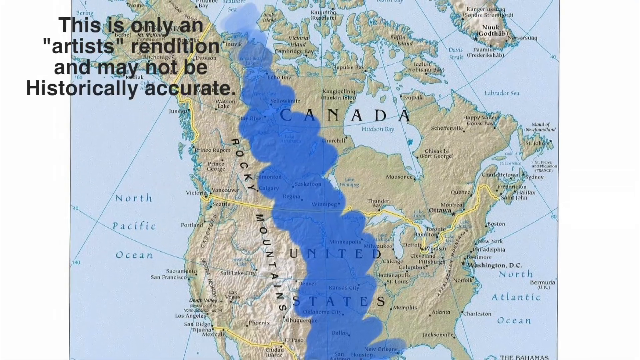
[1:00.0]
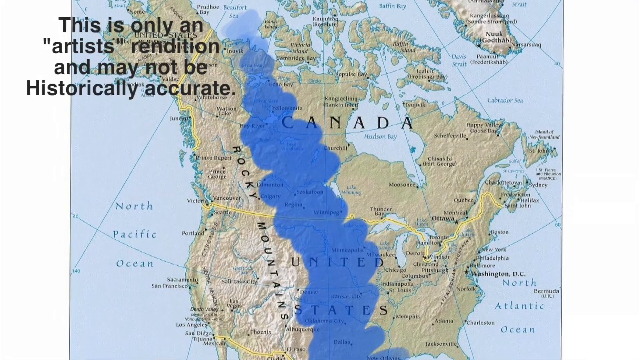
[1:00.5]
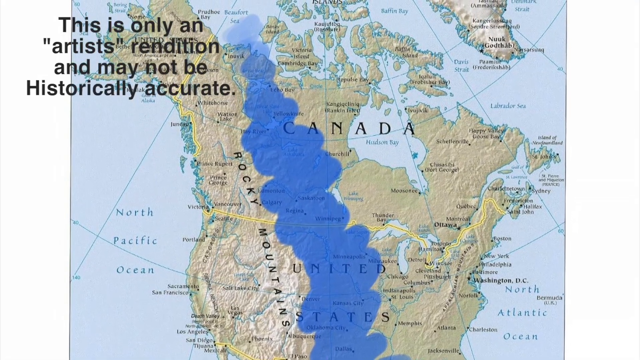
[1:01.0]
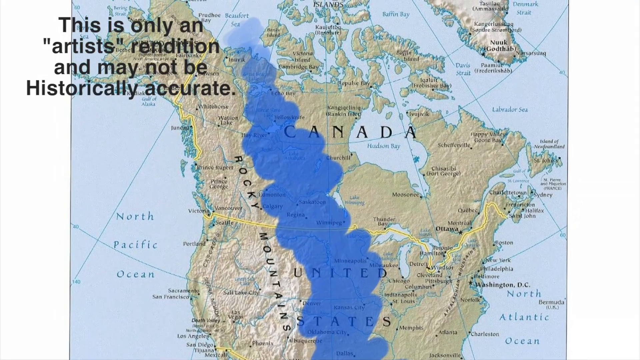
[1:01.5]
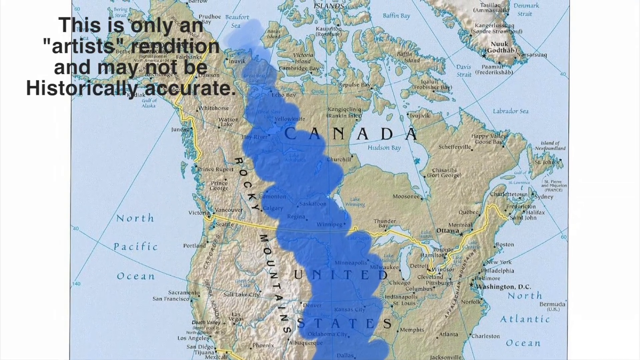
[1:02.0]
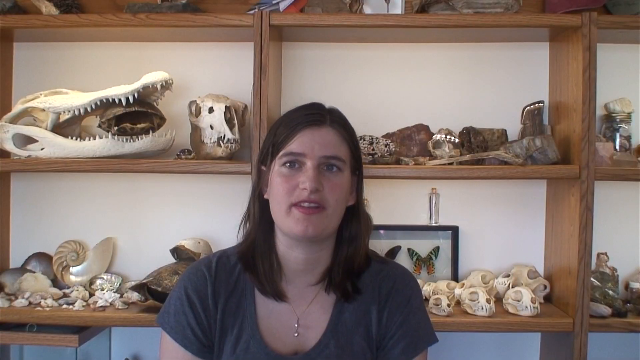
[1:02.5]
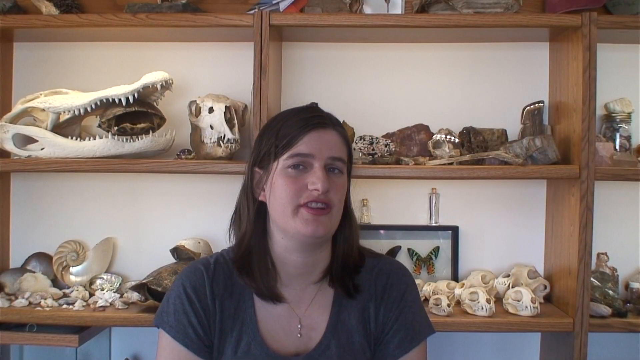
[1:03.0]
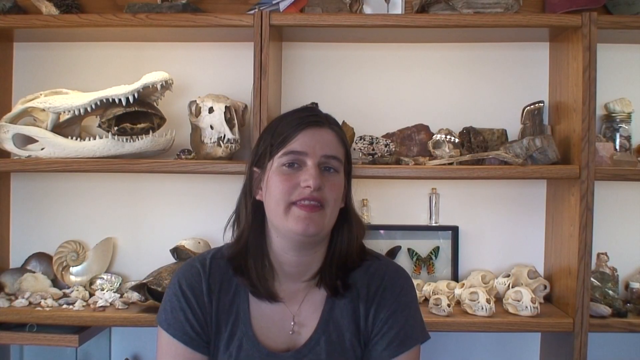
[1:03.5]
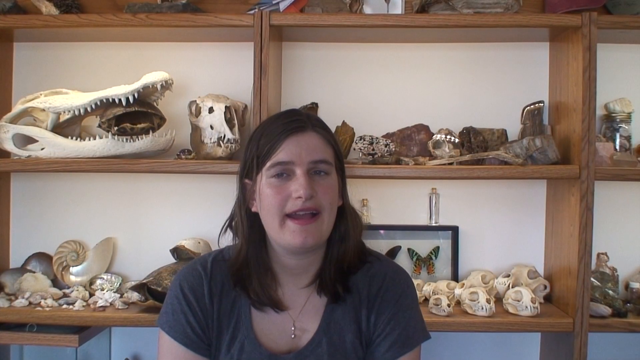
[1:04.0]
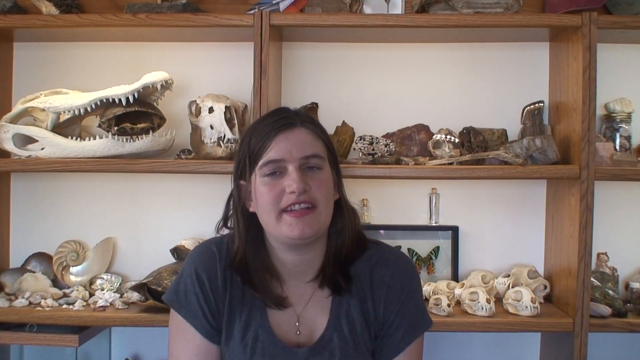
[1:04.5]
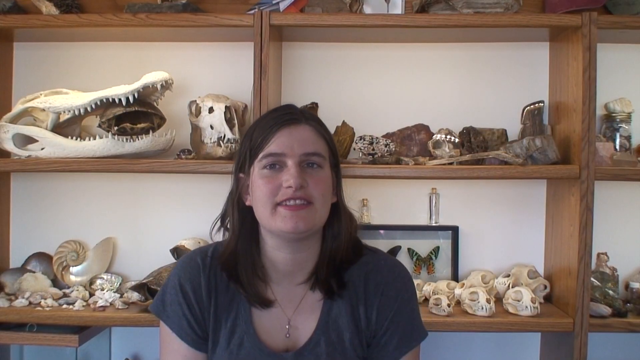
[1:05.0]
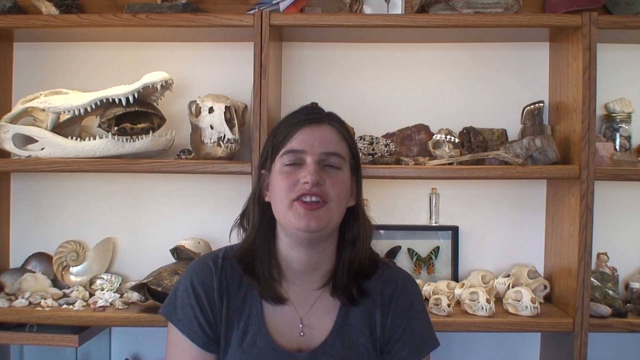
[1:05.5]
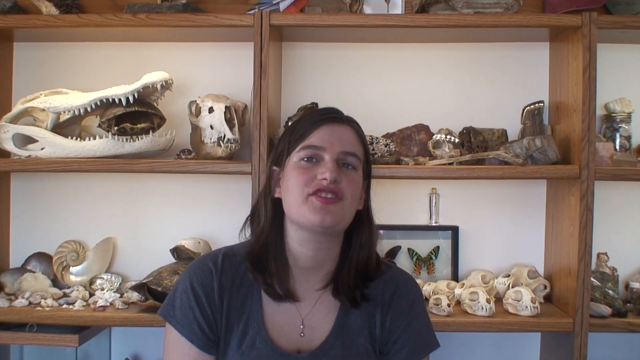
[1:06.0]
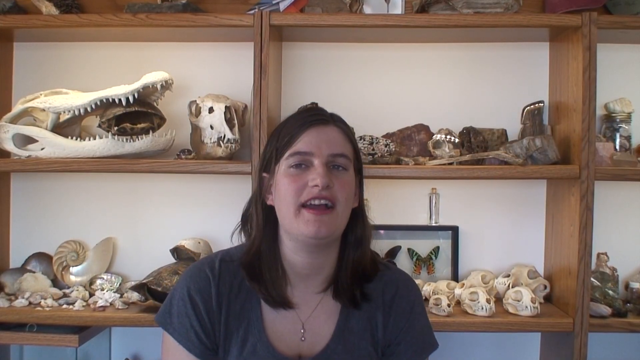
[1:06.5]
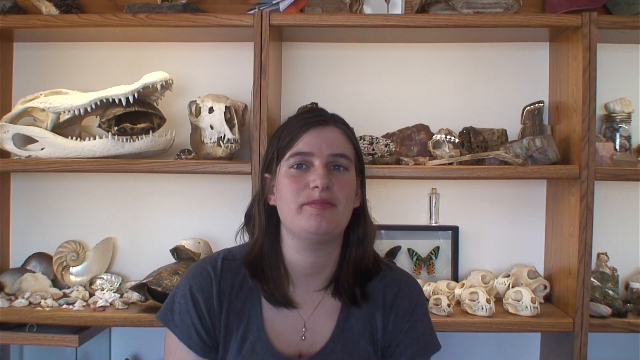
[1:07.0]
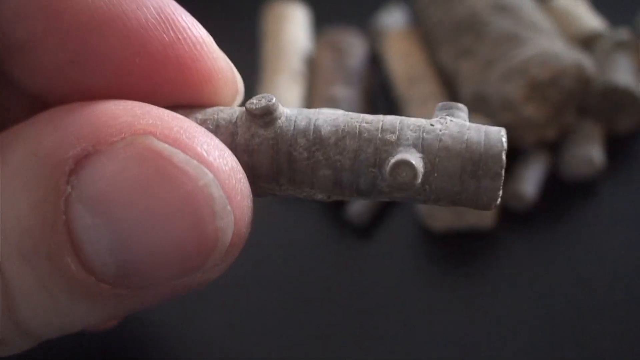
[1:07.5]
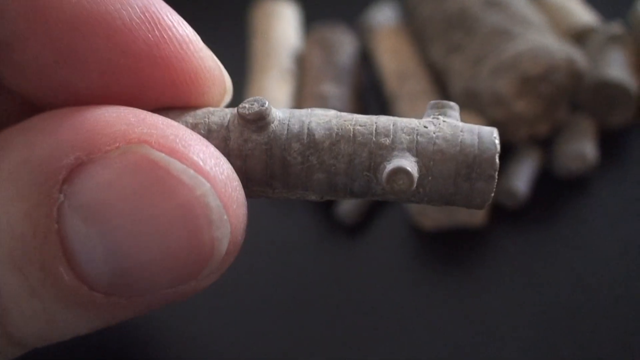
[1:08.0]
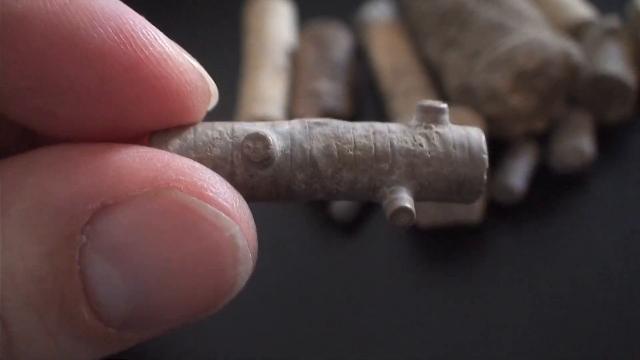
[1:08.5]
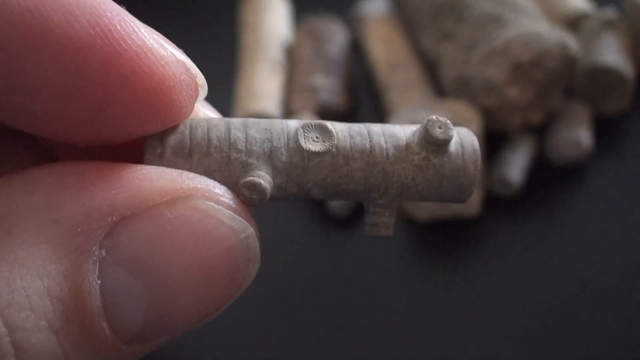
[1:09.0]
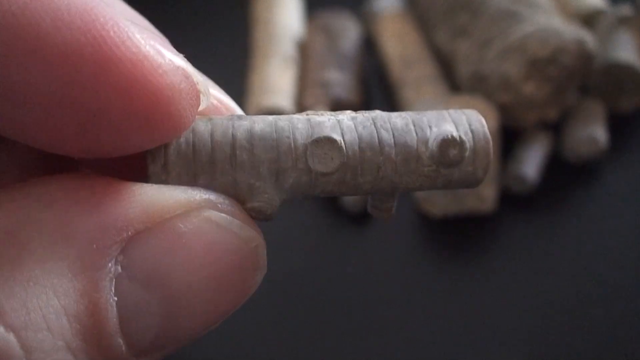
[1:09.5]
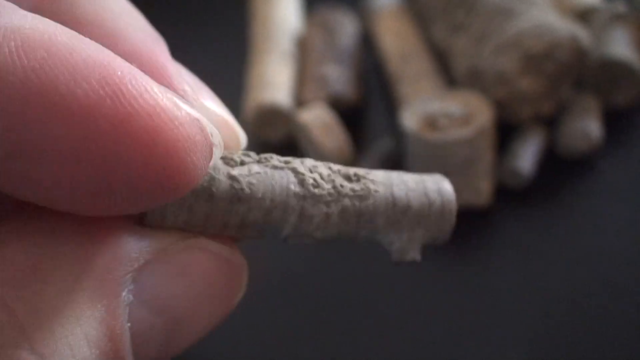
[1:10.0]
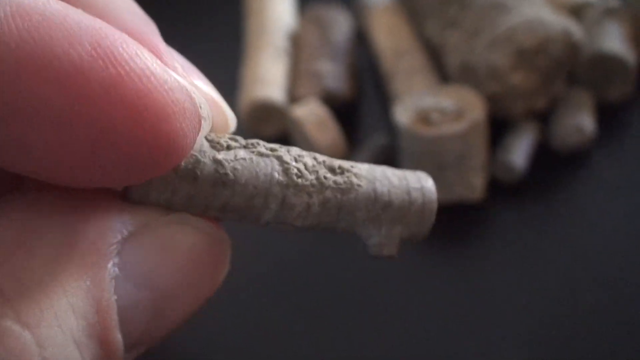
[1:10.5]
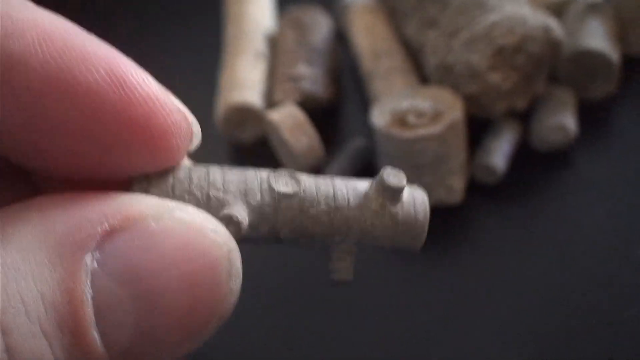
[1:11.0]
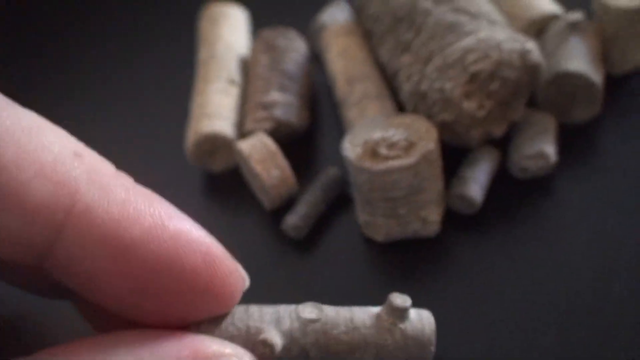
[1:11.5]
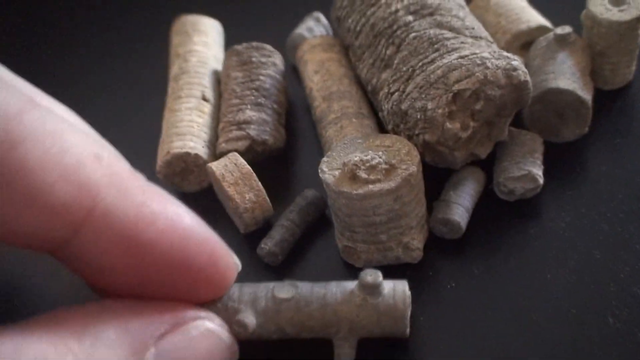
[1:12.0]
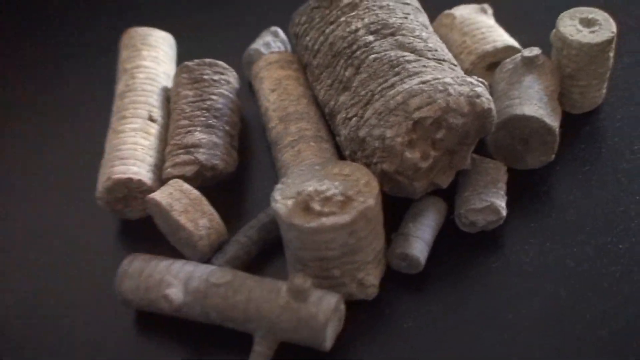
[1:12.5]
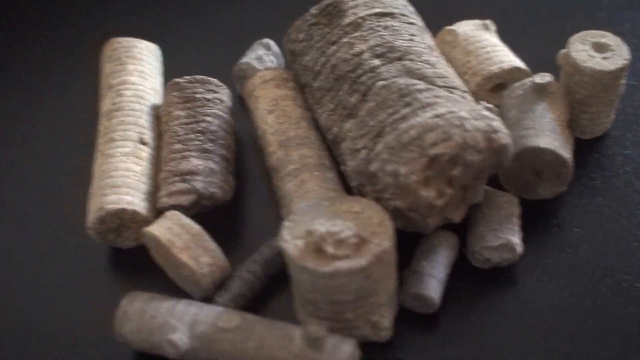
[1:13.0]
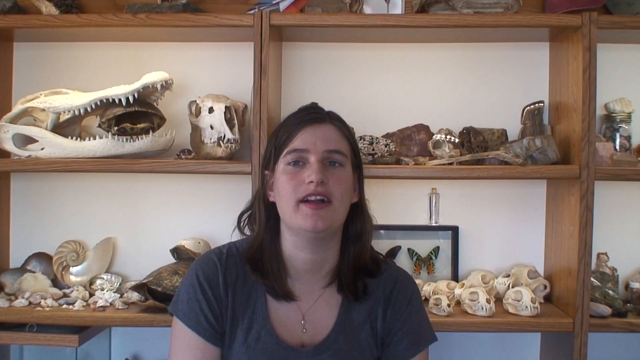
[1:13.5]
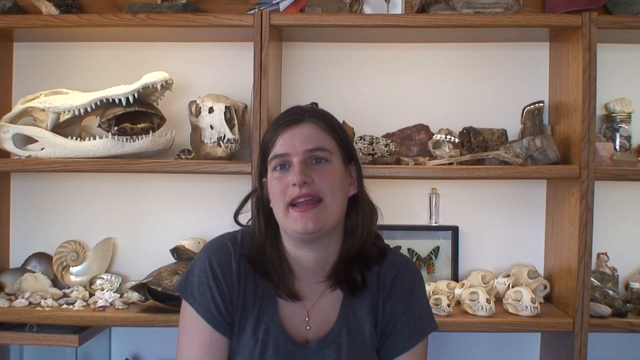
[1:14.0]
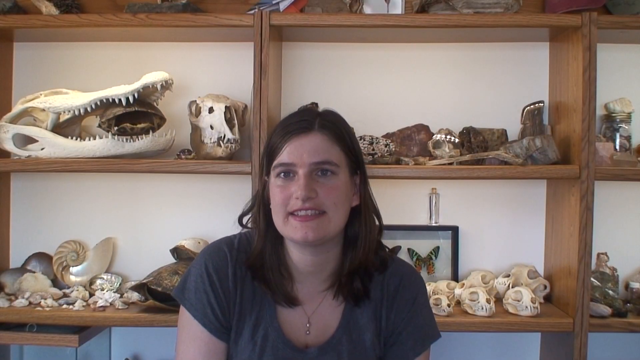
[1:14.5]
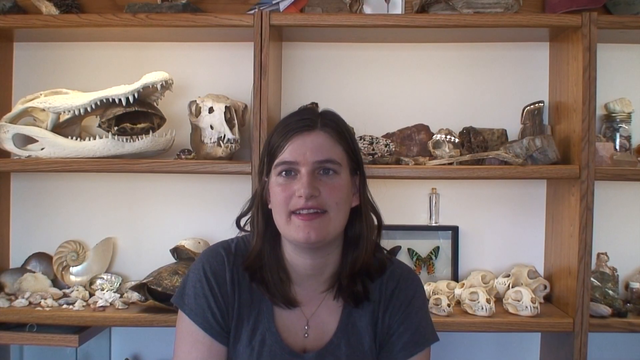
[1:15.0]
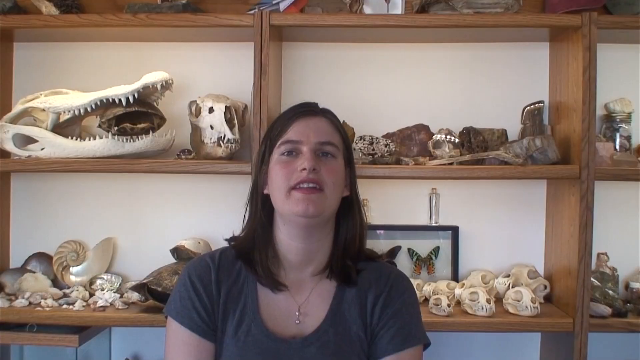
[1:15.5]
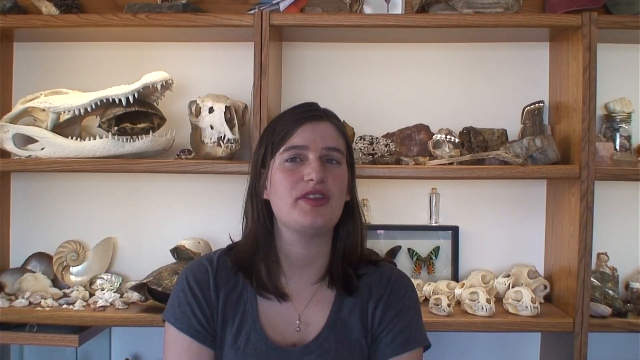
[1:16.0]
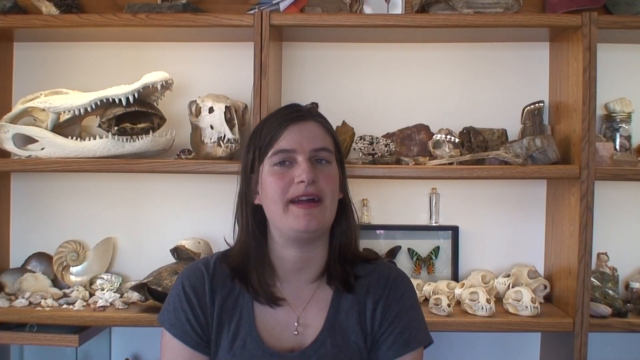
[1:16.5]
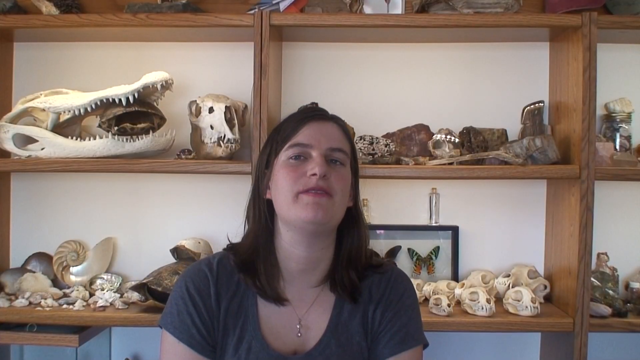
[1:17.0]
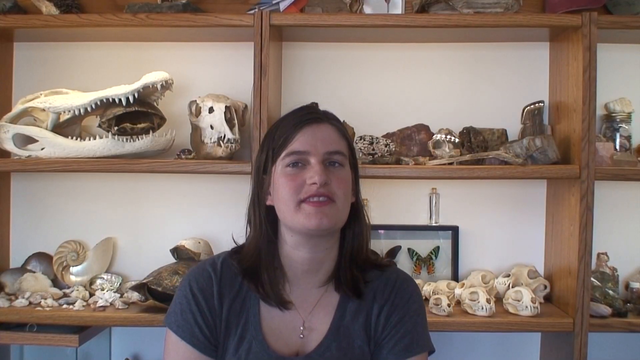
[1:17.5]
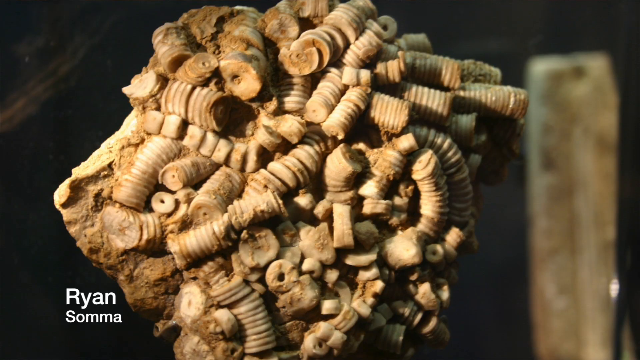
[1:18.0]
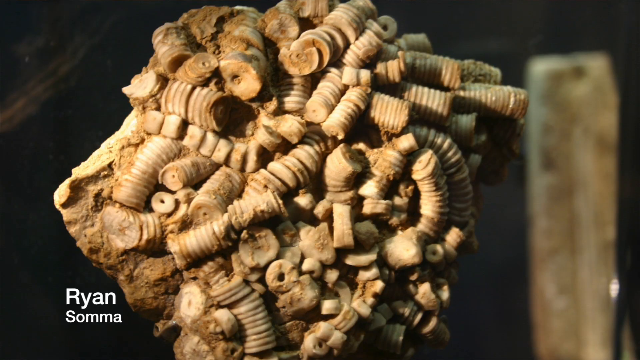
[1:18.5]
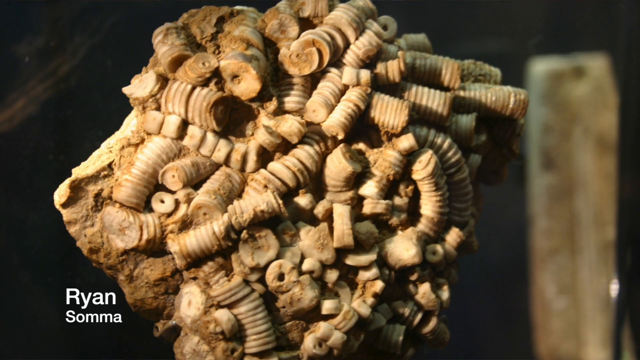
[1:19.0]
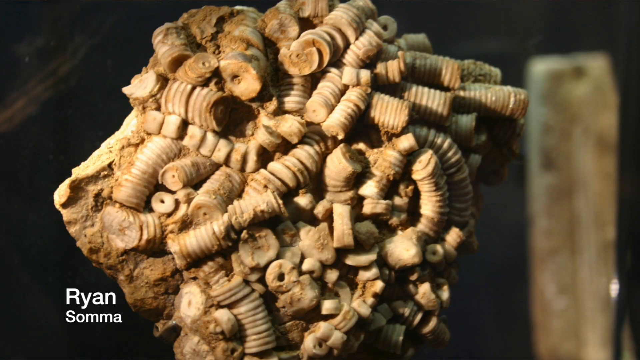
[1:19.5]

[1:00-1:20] The map of Canada and the US shows a section colored in blue. The camera continues panning up, and the scene transitions to the speaker in the center of the screen, with the many wooden shelves behind her filled with various fossils, skulls, other oddities and bric-a-brac. The woman, with long straight dark hair, continues to speak. The scene transitions to a hand on the left side of the screen holding a fossil, which is spun around to show it from various angles and then gently placed on a dark-colored table beside other similar fossils. The screen returns to the speaker, who continues to speak, and then transitions to a clump of fossils.